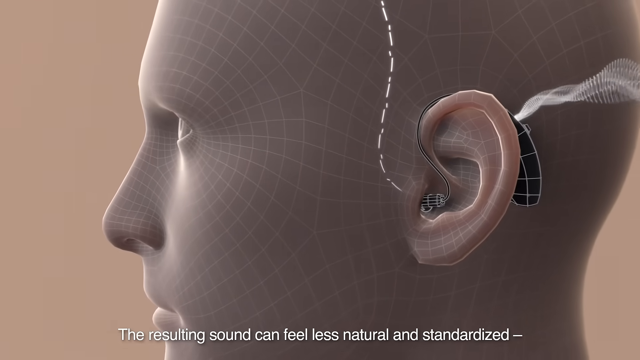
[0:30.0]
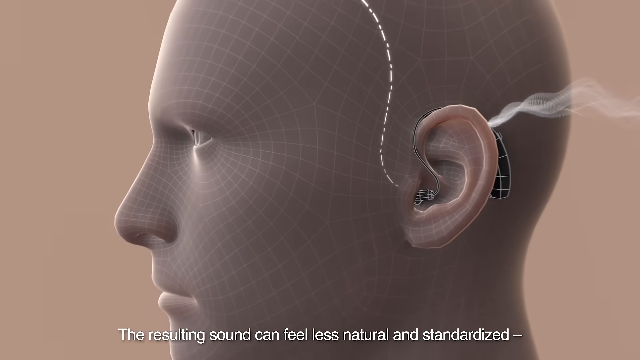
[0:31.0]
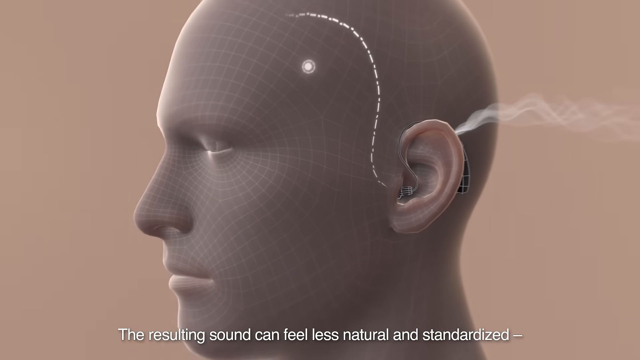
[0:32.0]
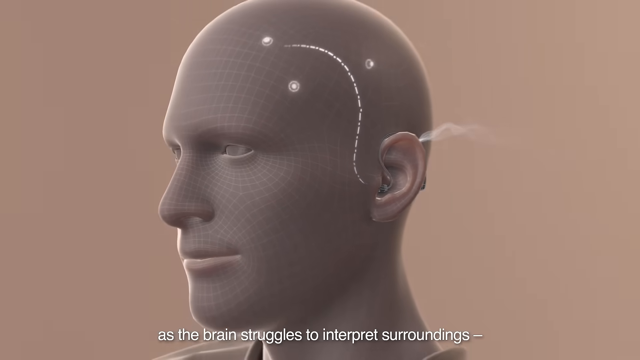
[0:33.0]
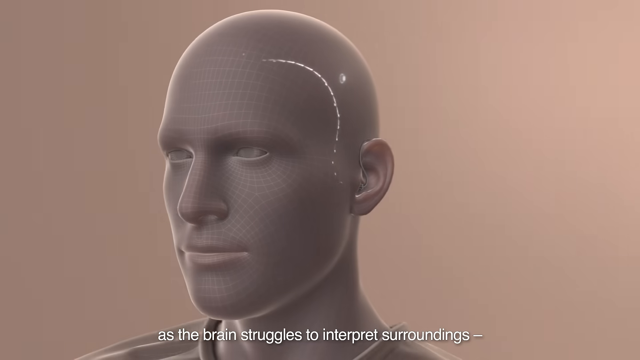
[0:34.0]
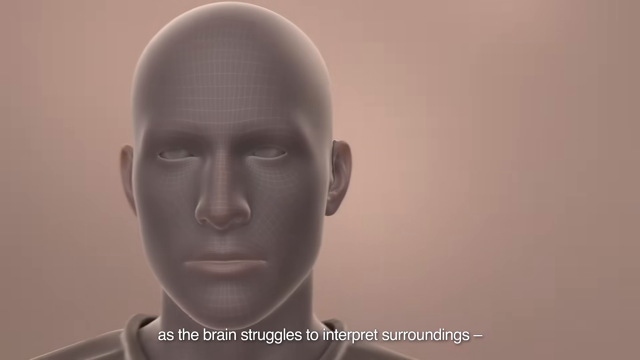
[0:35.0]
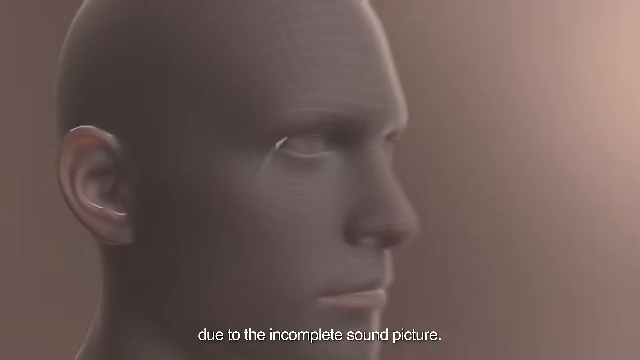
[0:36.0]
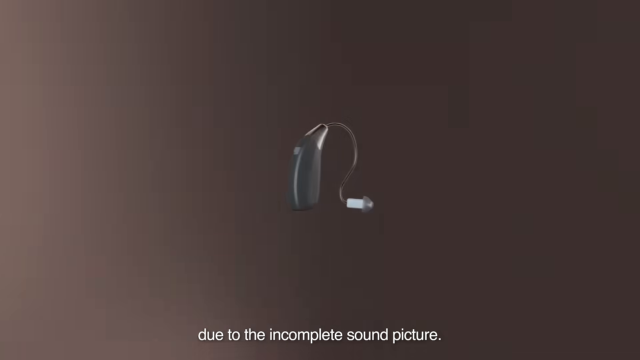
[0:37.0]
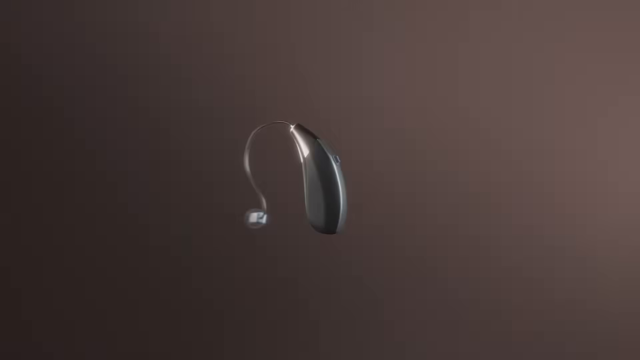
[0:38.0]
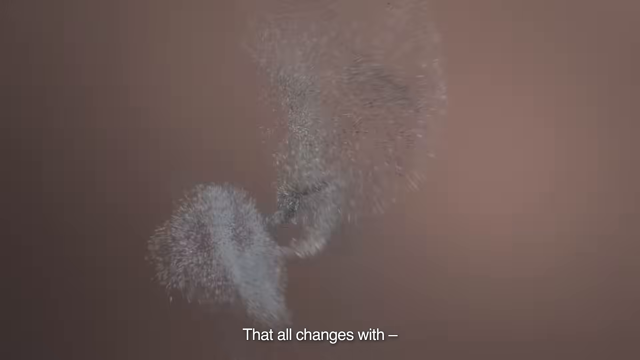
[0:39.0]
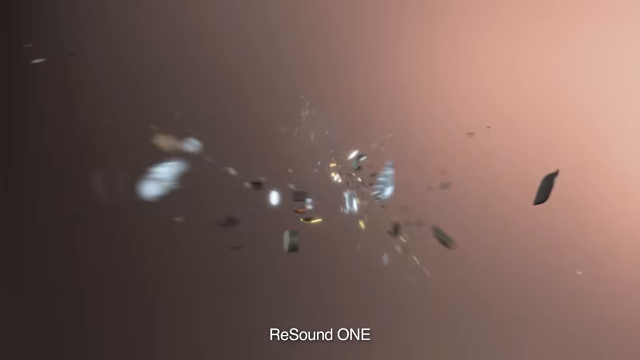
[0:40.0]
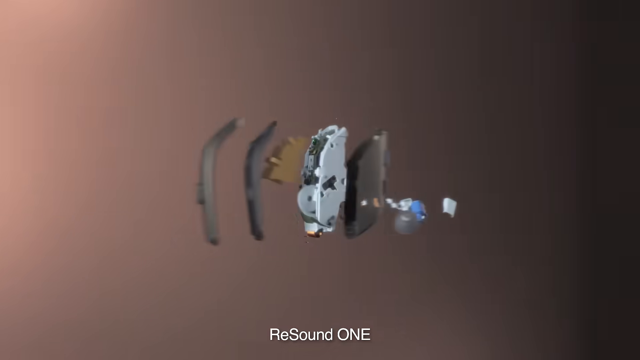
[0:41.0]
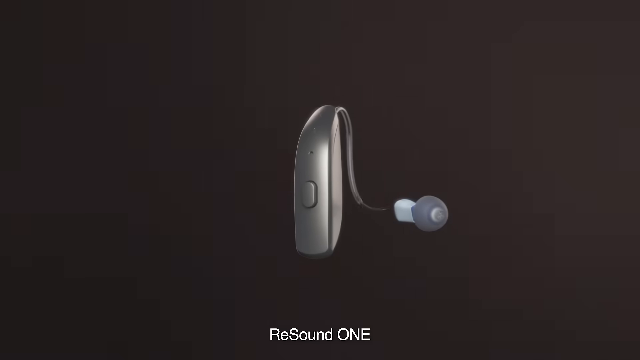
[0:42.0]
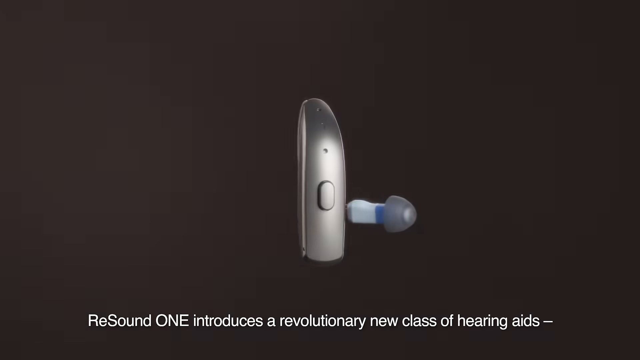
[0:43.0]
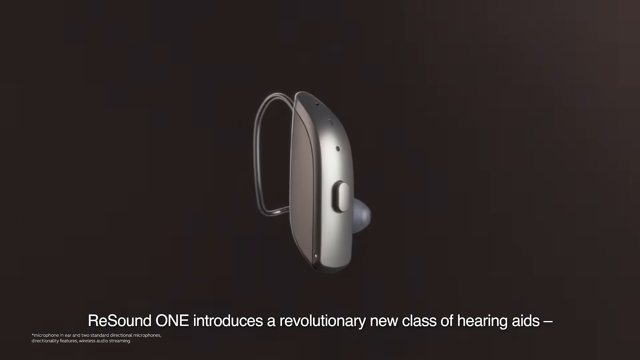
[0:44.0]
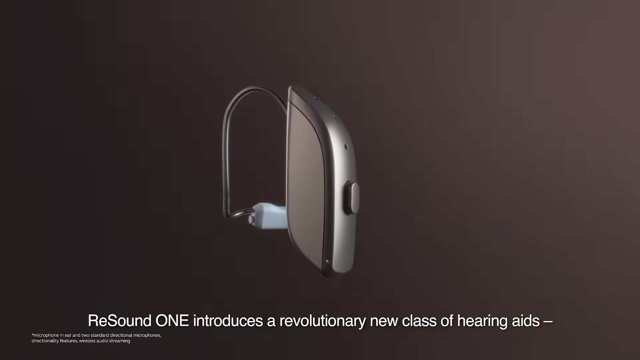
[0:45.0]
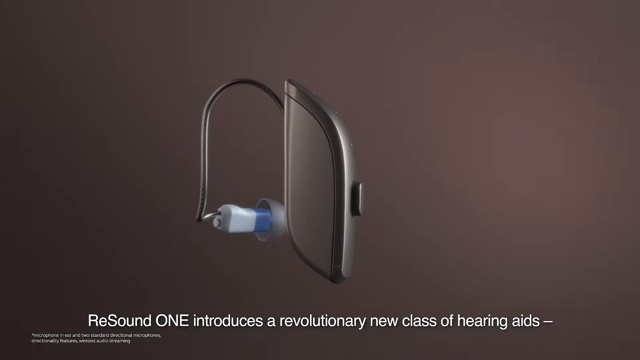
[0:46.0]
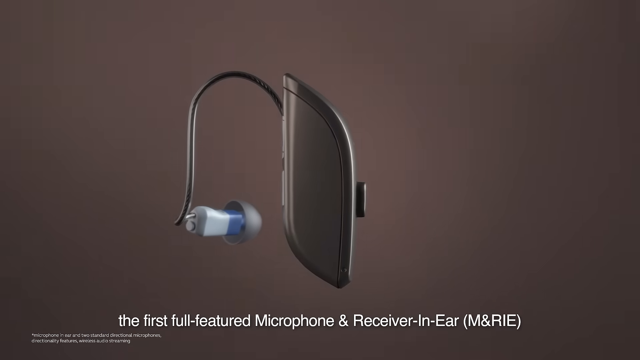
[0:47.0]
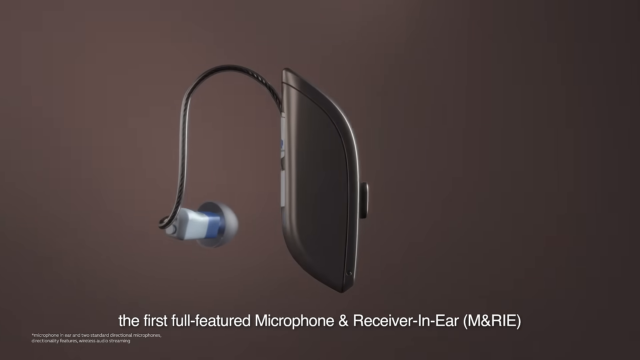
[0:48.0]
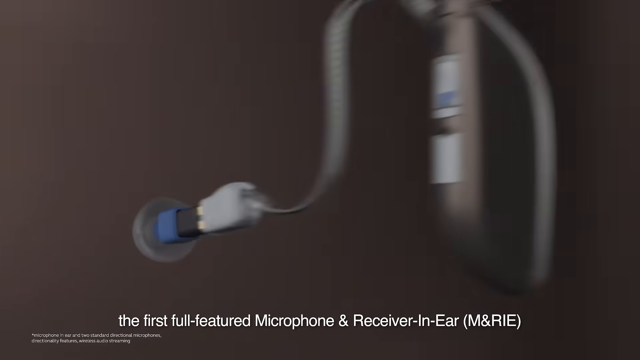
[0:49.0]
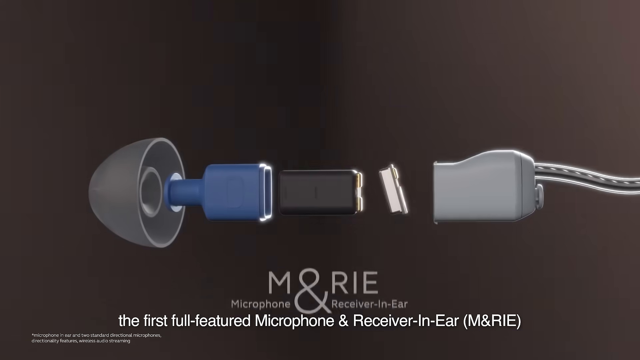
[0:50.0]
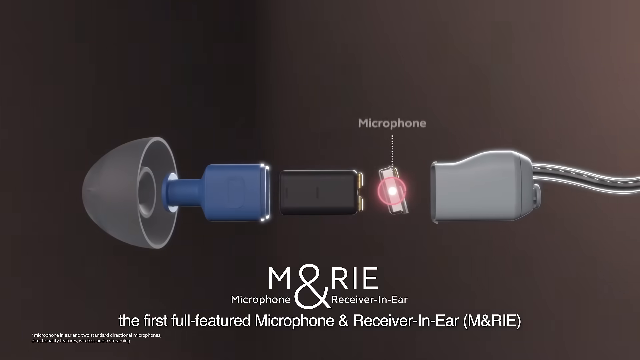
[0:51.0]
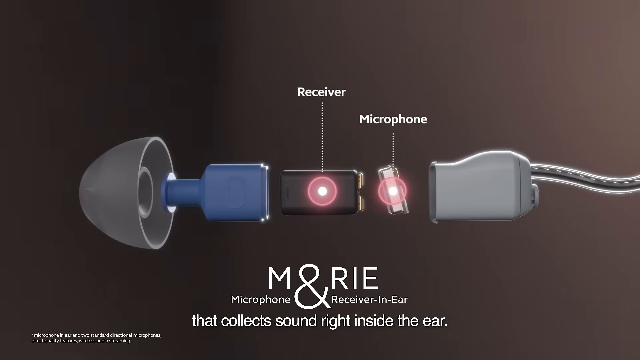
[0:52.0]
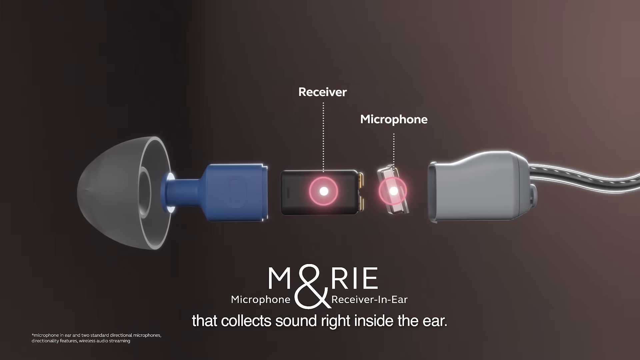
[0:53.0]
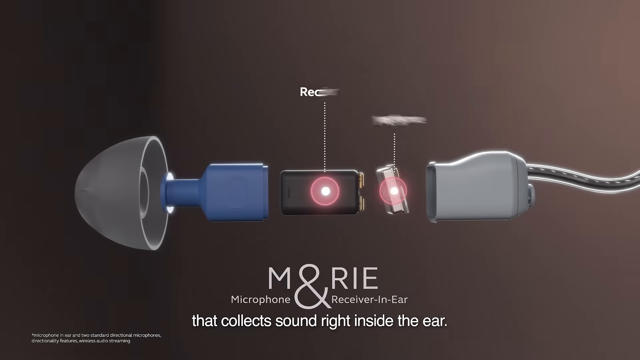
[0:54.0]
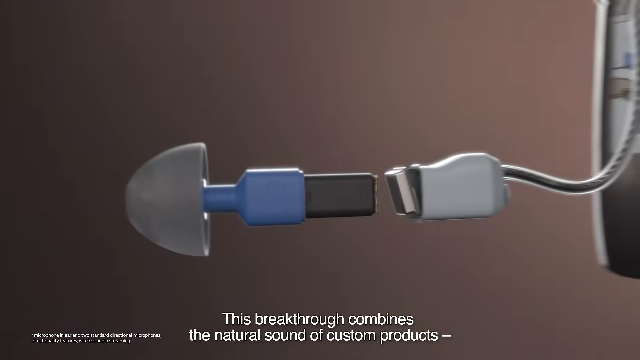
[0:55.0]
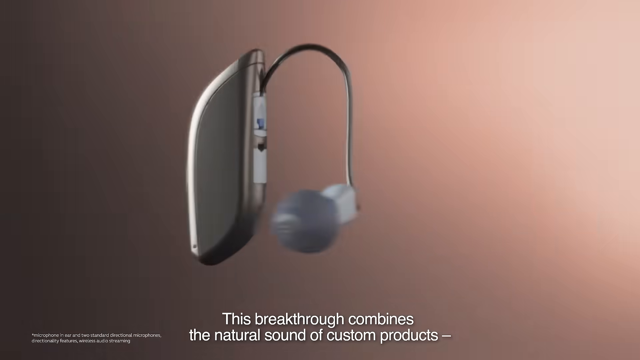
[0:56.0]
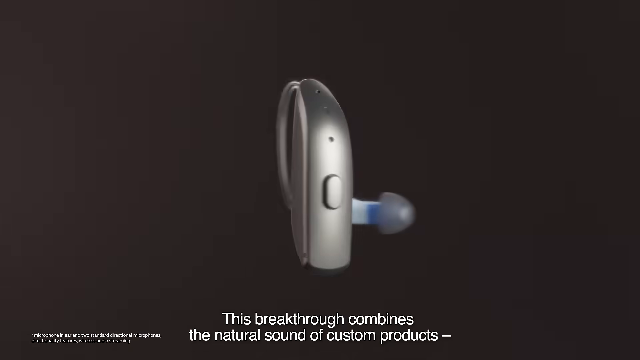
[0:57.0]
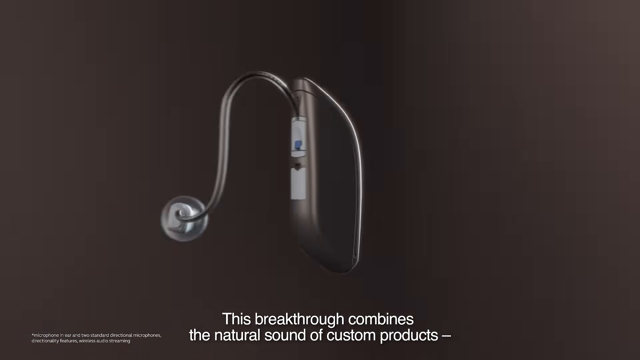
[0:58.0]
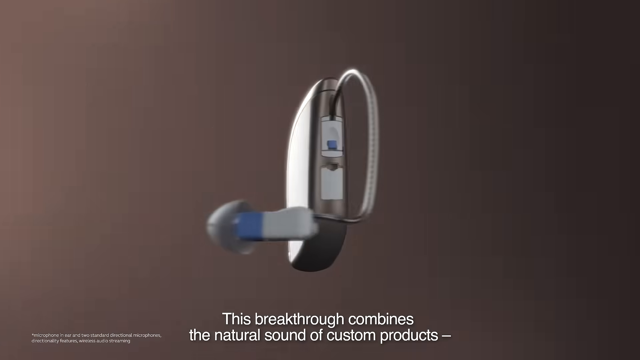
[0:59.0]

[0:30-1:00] Sound waves are shown entering the human body through the right ear with the assistance of the hearing aid. The video then focuses on the hearing aid, including a small piece that has a button to press. It shows in detail an in-ear receiver attached to the microphone, which seems to be plugged into the ear. The hearing aid is broken down into its internal parts: a receiver, a microphone and an in-ear receiver. The product apparently is called M&RIE.